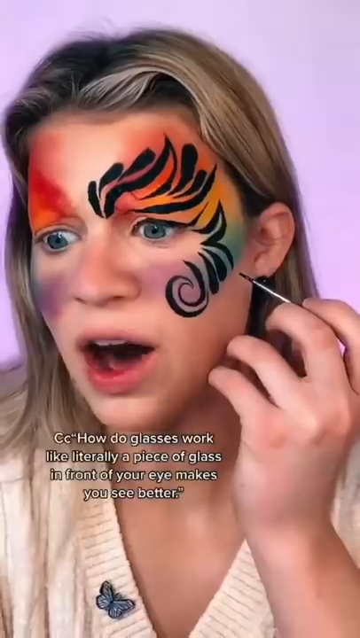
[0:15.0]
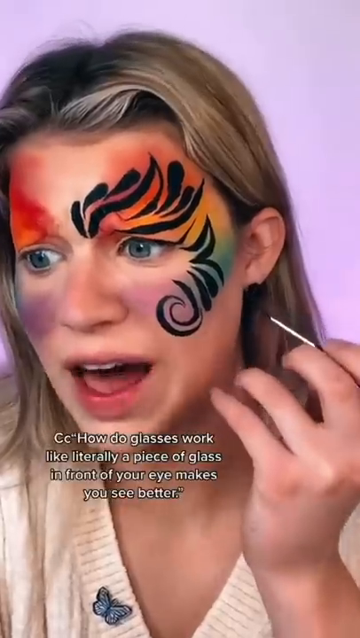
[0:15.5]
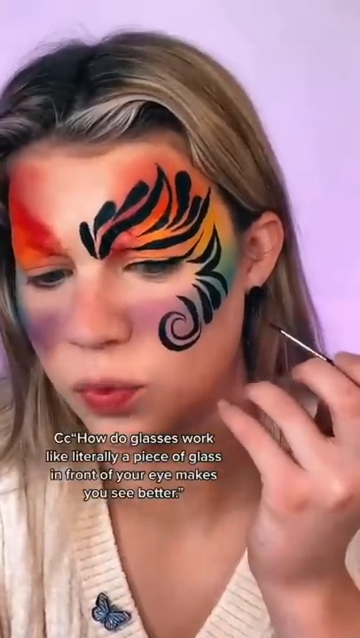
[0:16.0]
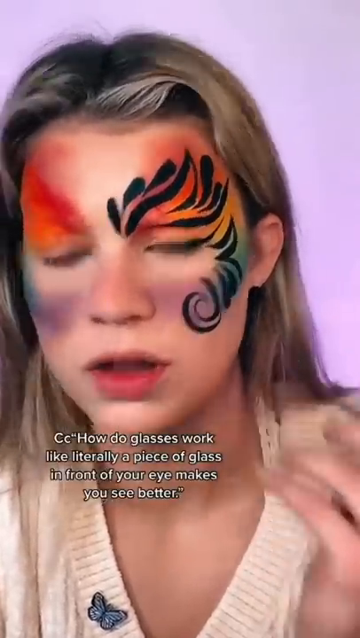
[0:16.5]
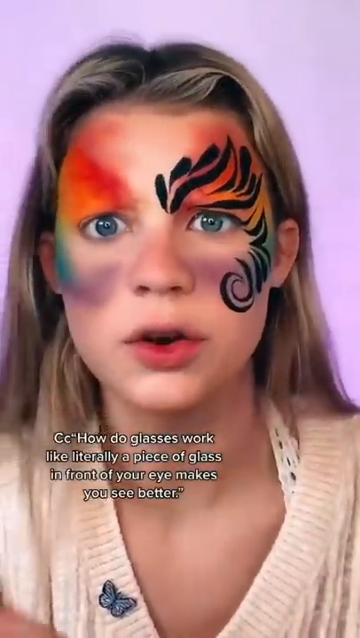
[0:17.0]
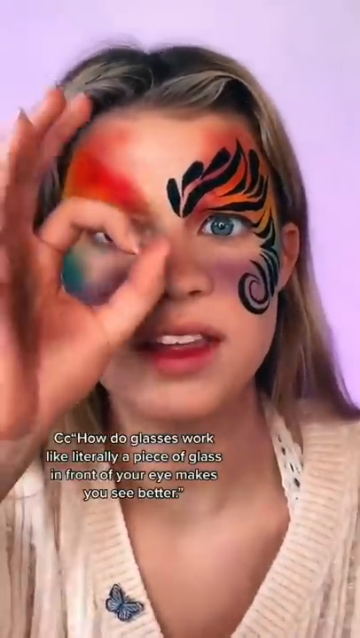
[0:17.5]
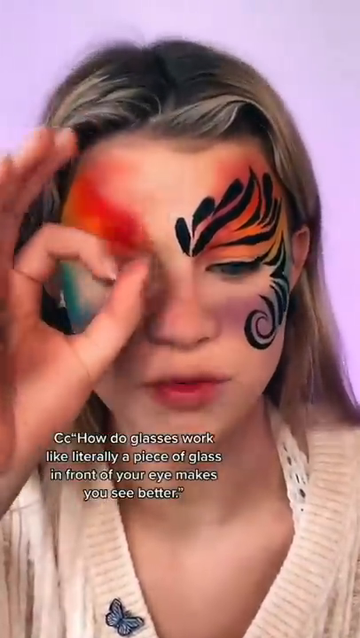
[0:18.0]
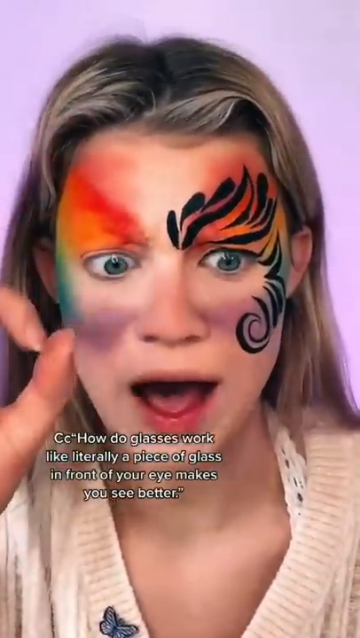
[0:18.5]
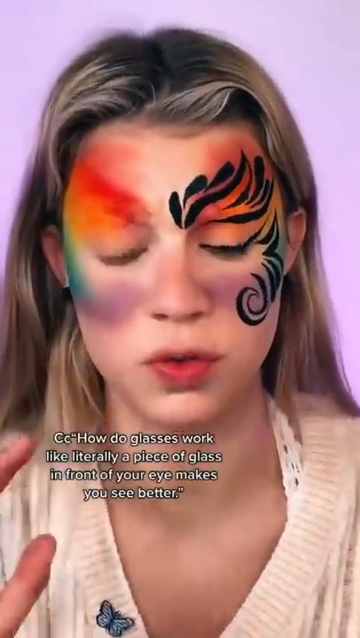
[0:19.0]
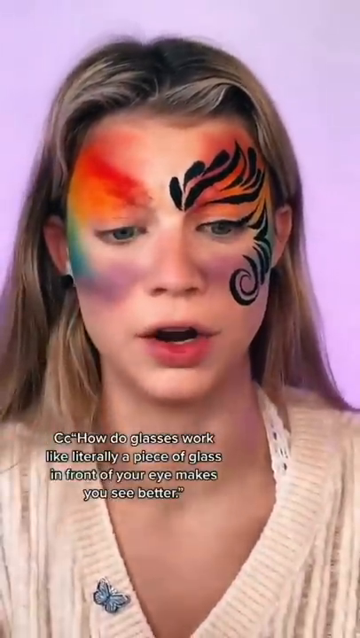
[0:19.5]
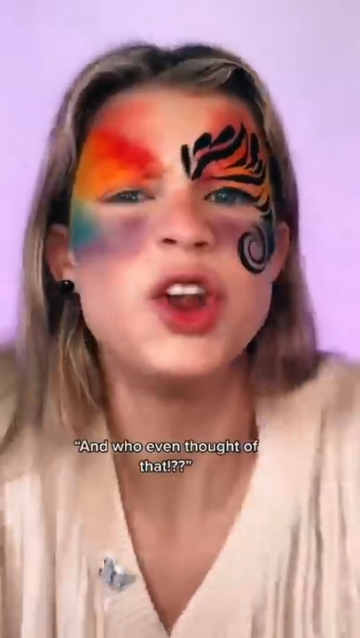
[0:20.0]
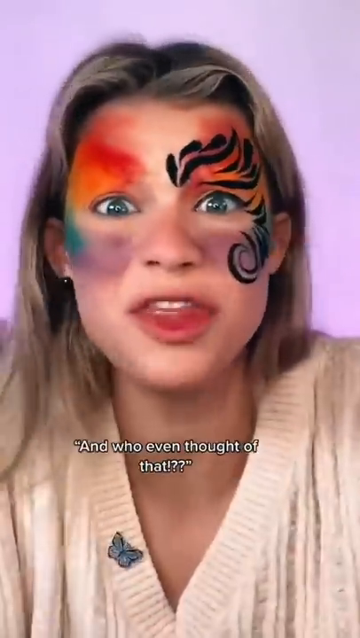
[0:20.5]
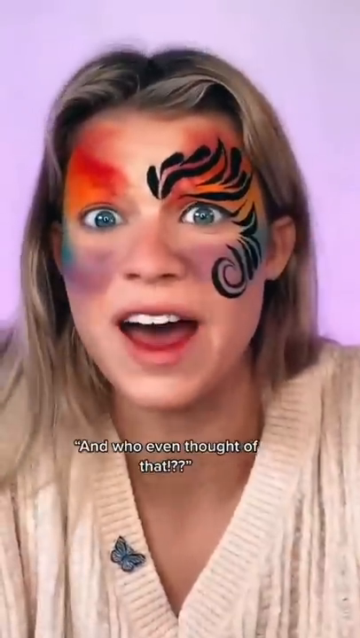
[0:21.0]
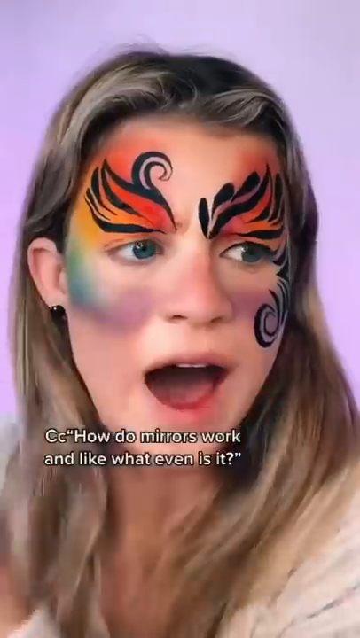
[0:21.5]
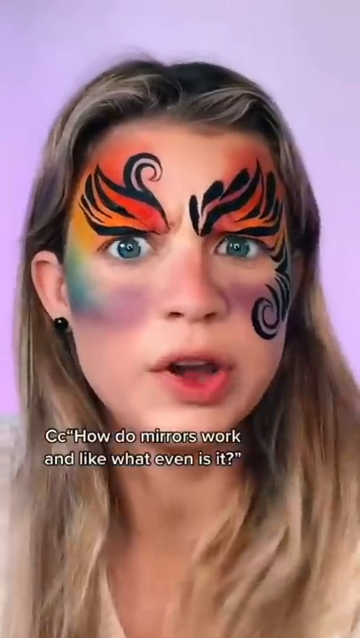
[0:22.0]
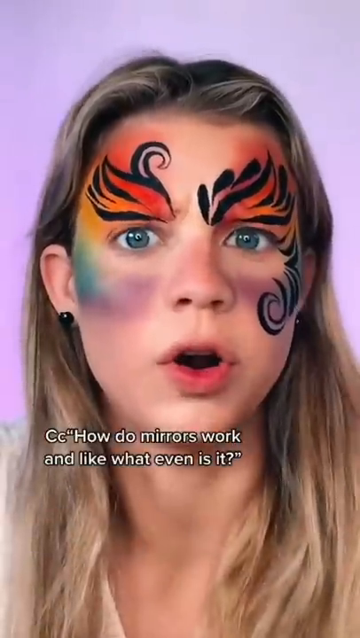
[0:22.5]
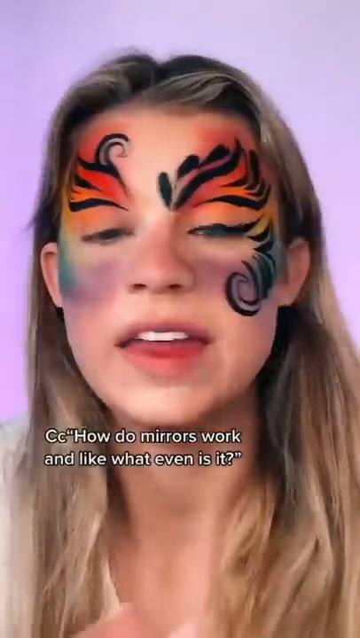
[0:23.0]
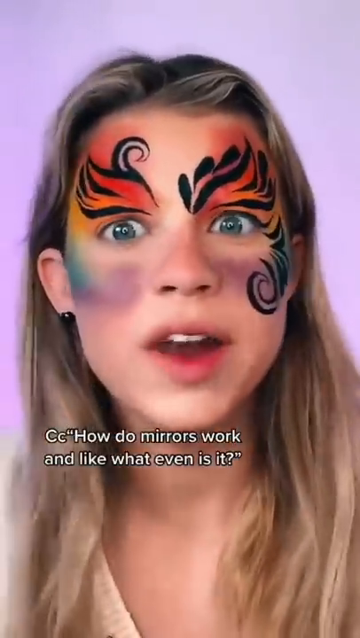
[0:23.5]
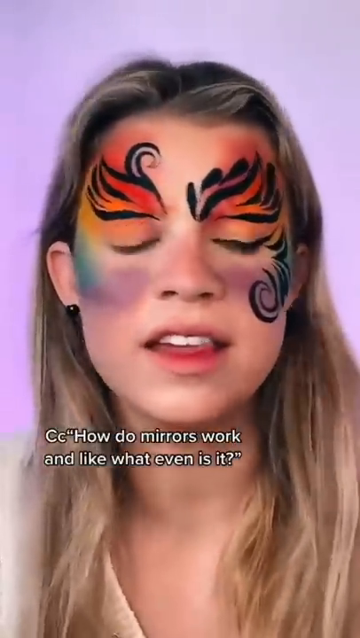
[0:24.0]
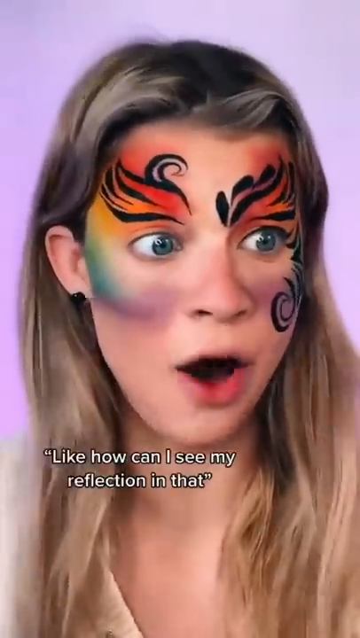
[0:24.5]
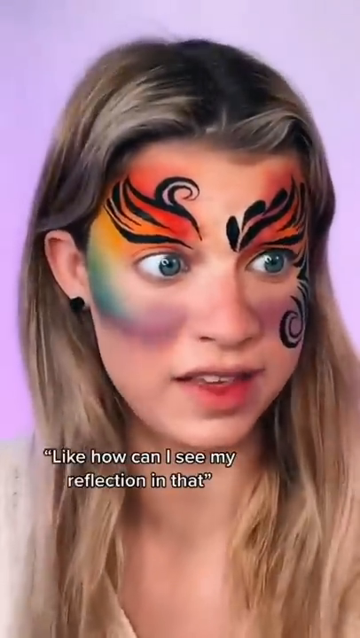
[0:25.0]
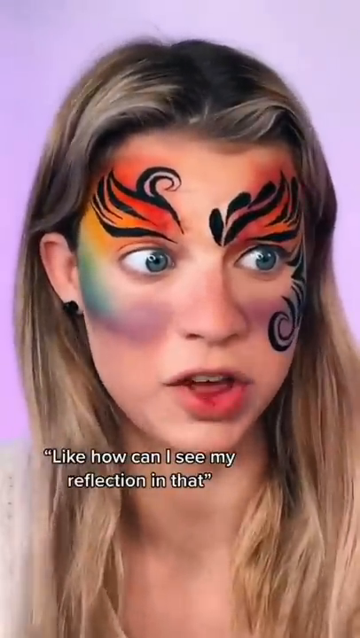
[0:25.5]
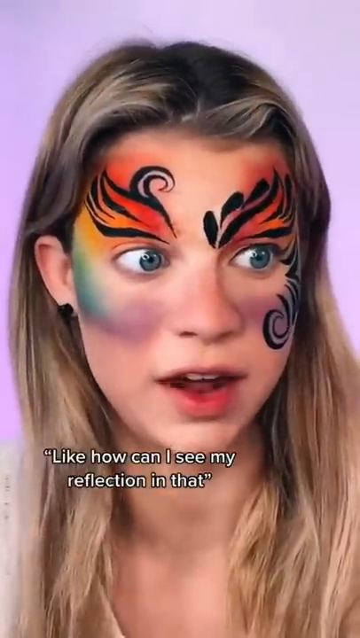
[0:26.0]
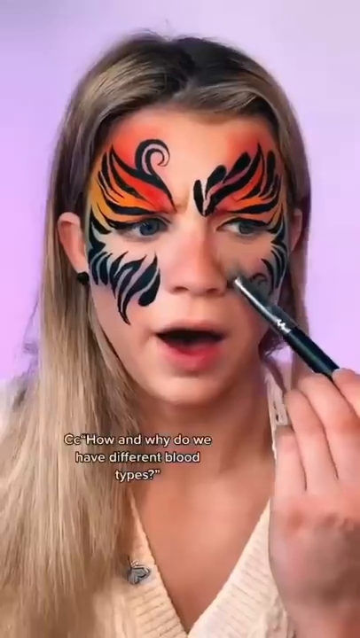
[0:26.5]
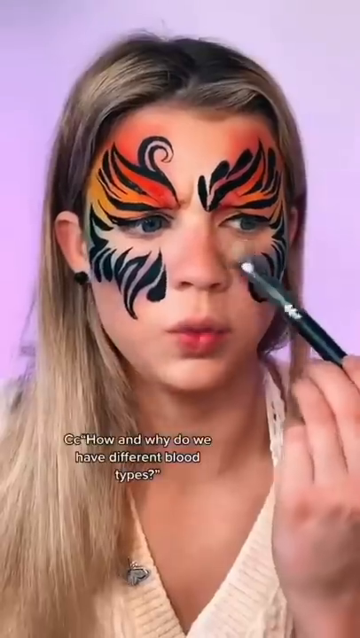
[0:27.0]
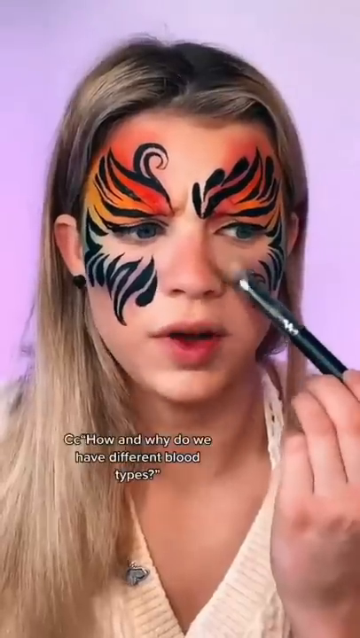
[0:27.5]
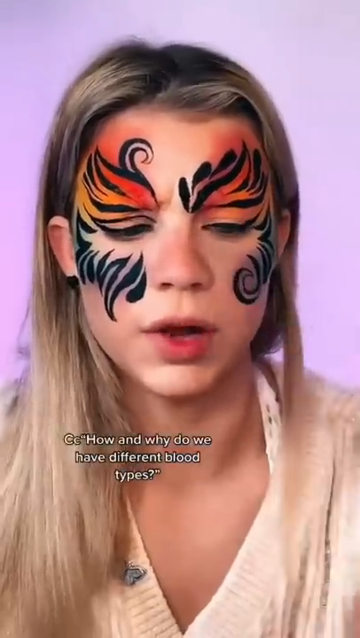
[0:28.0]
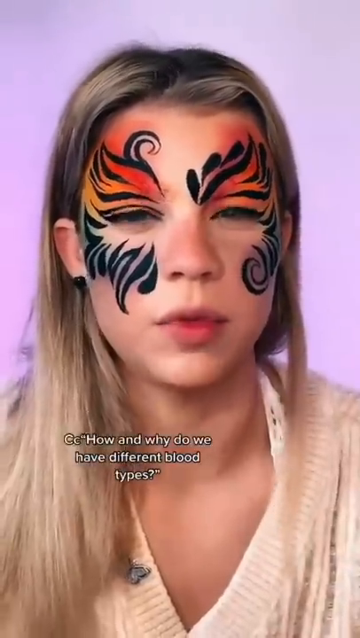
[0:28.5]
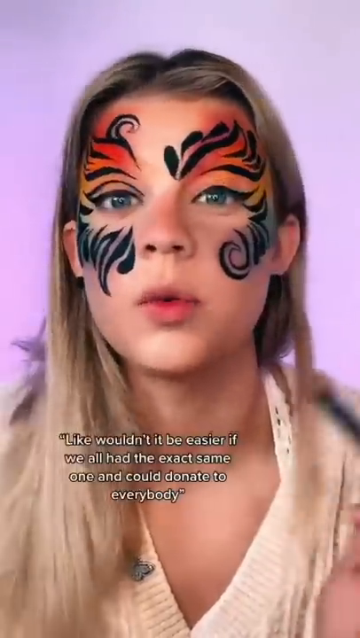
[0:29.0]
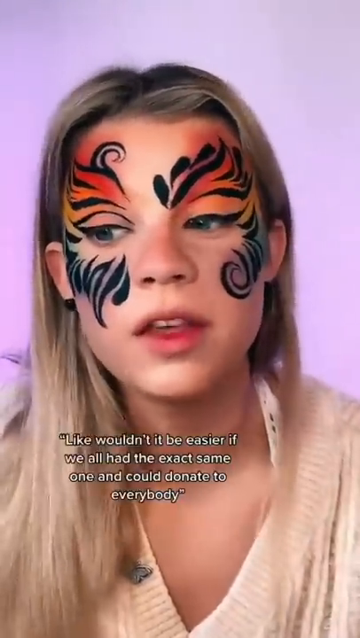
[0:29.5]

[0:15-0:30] A Caucasian girl in a white sweater with a black and blue butterfly pin on the lapel continues to paint her face in black. With black paint she paints what kind of looks like a swan above her left eye, and something like leaves or water above and below her right eye. She has blonde hair and wears black stud earrings, and she uses a black makeup brush to put purple shadow underneath her eyes. She maybe has a bit of lipstick on her lips. At one point she makes the okay sign by putting her pointer finger and thumb together and holds it over her right eye while talking to the camera. Her complexion is very light, perhaps a little tan, and she wears a white tank top under her sweater.